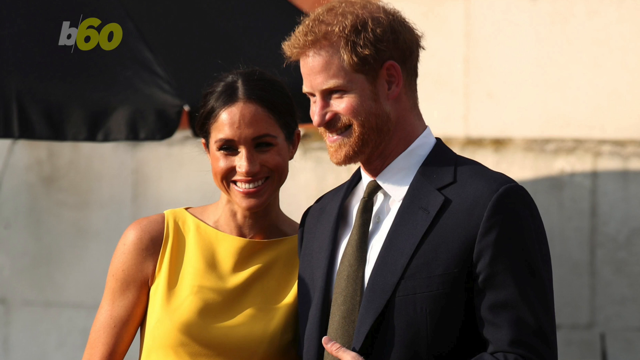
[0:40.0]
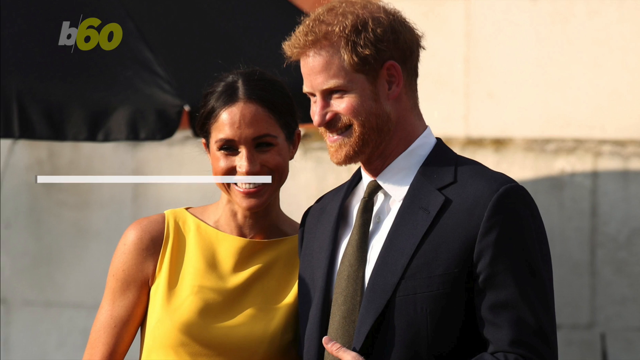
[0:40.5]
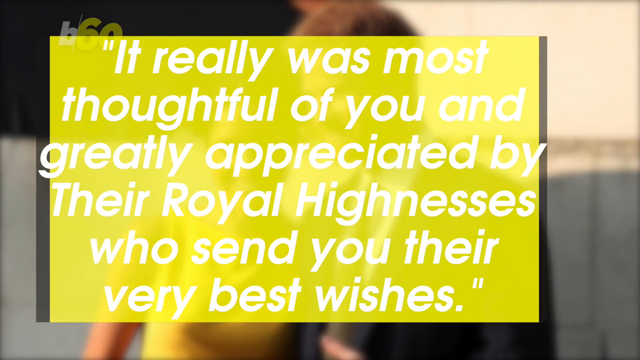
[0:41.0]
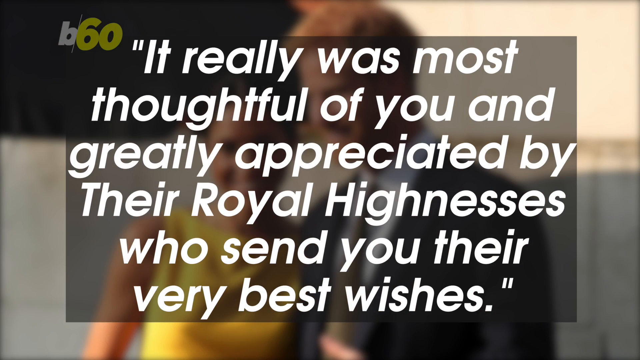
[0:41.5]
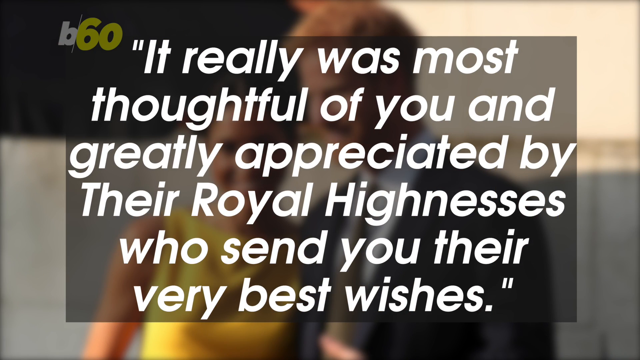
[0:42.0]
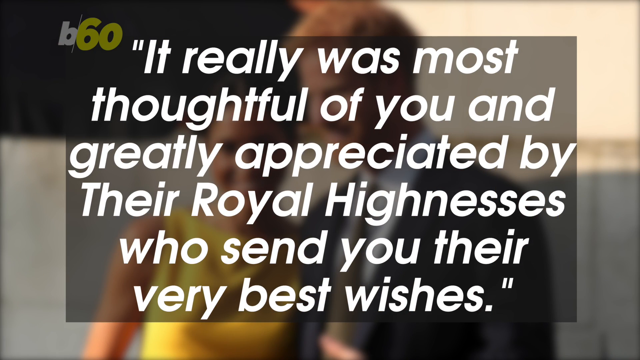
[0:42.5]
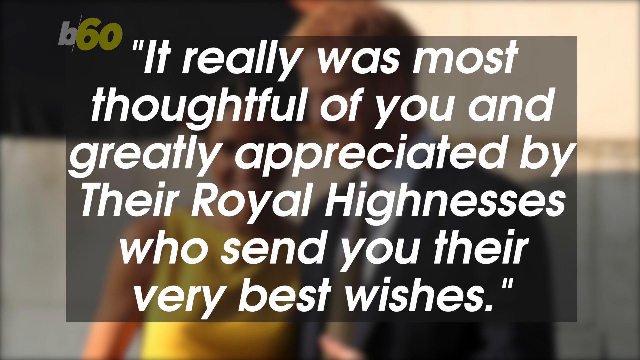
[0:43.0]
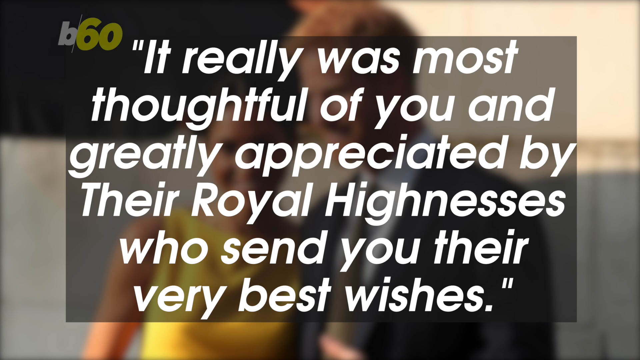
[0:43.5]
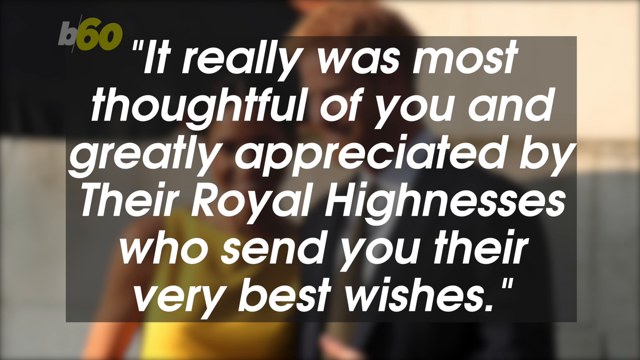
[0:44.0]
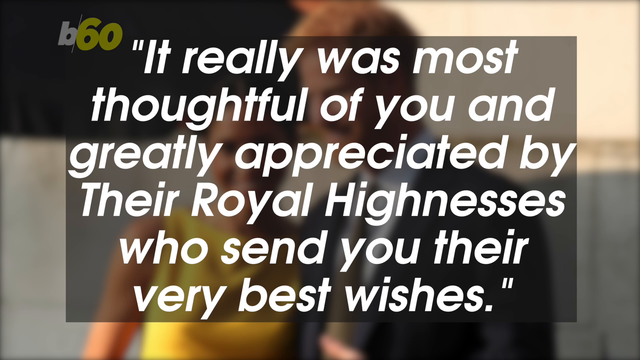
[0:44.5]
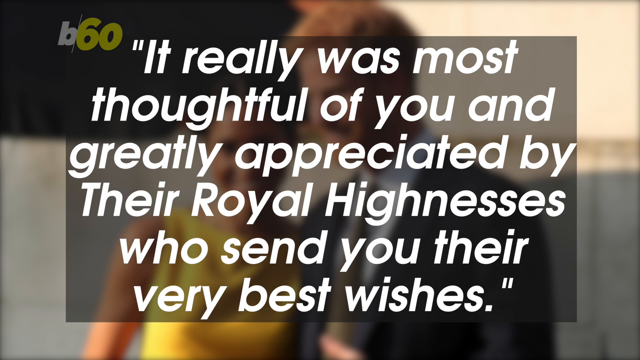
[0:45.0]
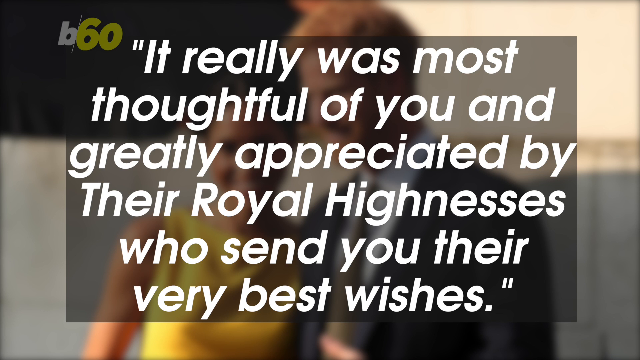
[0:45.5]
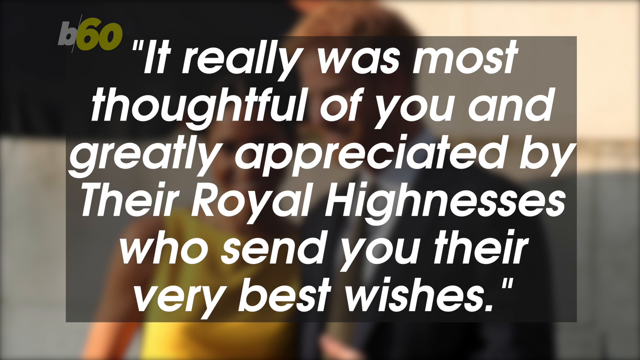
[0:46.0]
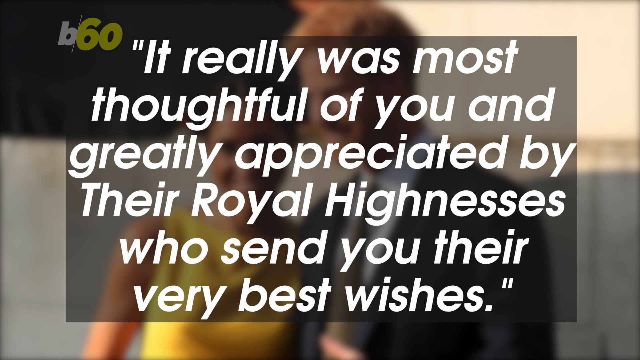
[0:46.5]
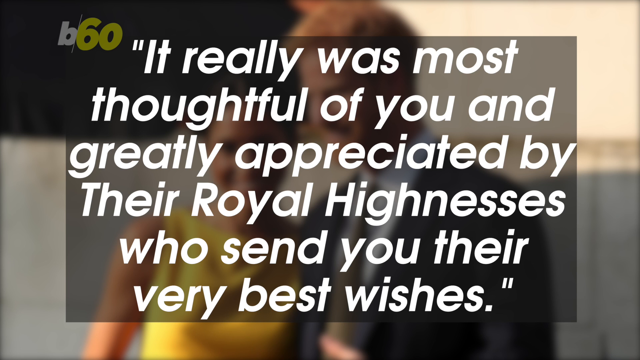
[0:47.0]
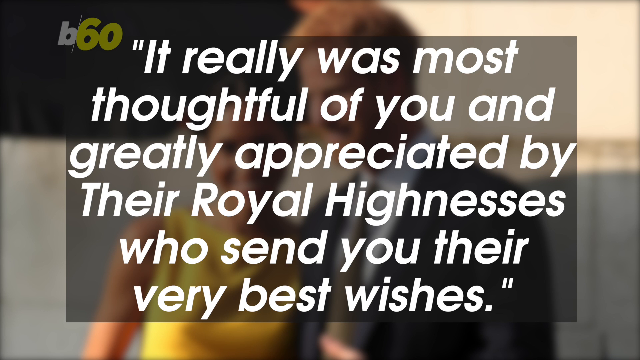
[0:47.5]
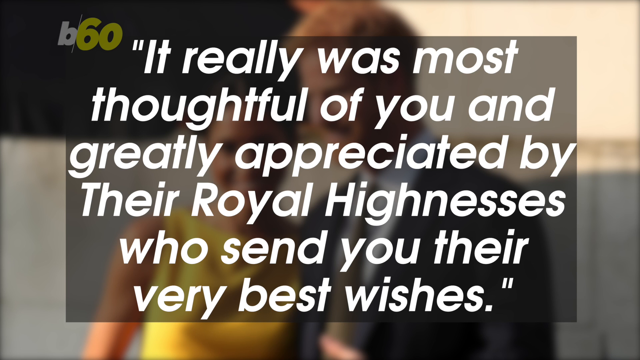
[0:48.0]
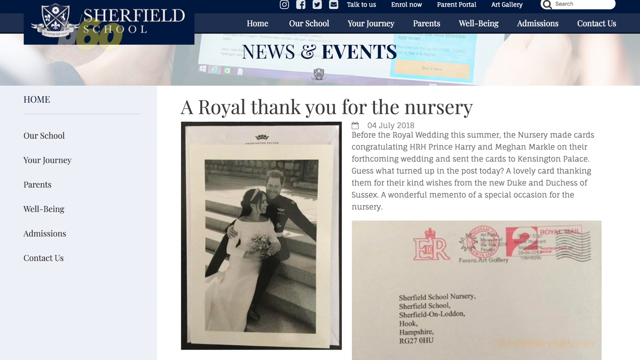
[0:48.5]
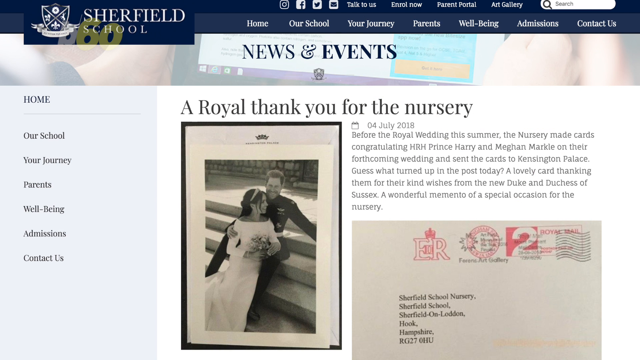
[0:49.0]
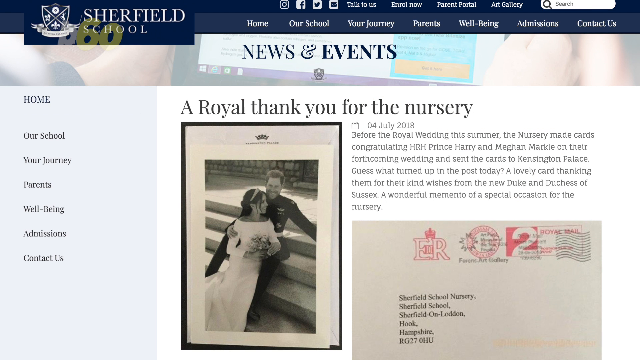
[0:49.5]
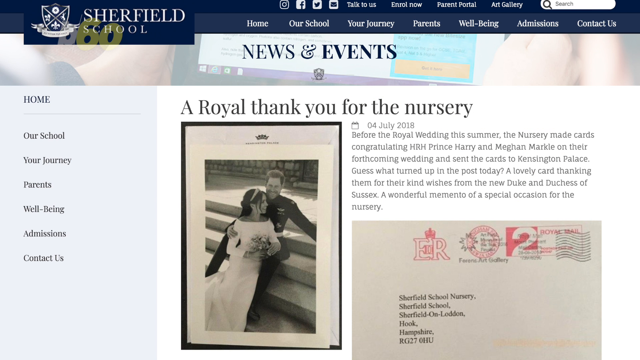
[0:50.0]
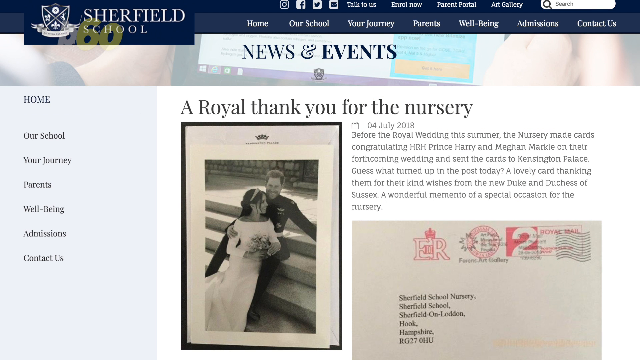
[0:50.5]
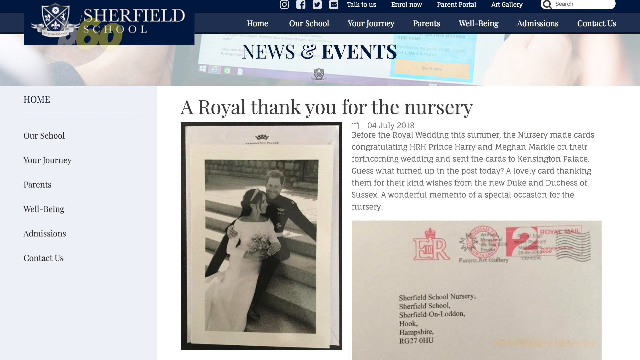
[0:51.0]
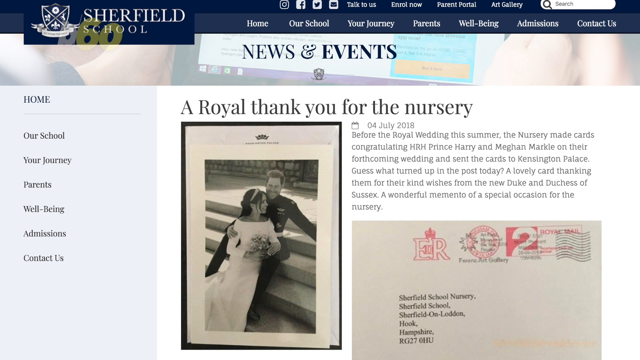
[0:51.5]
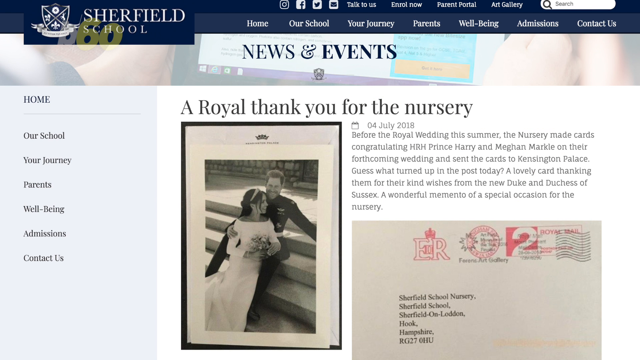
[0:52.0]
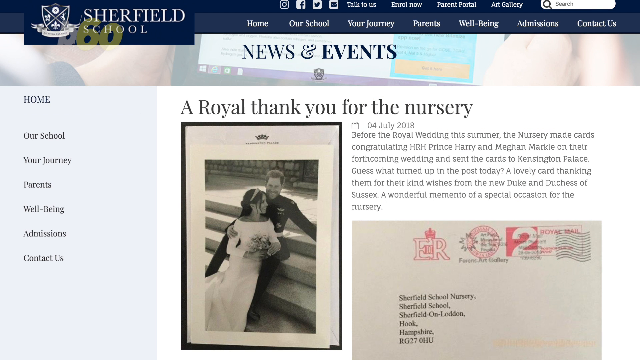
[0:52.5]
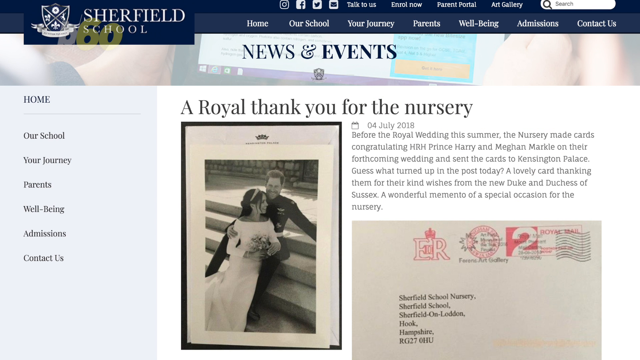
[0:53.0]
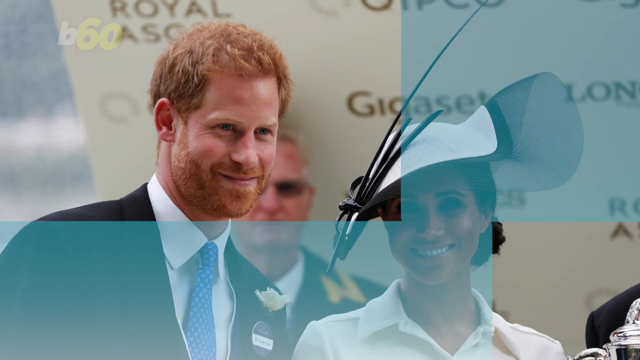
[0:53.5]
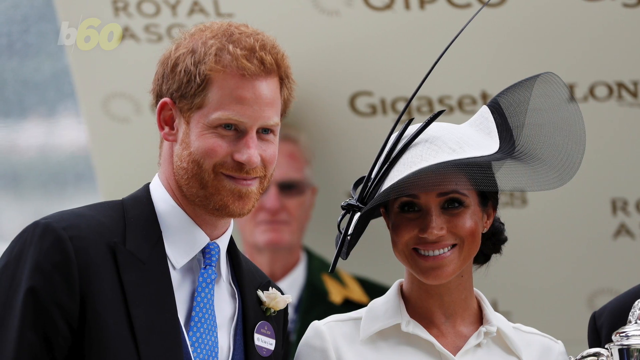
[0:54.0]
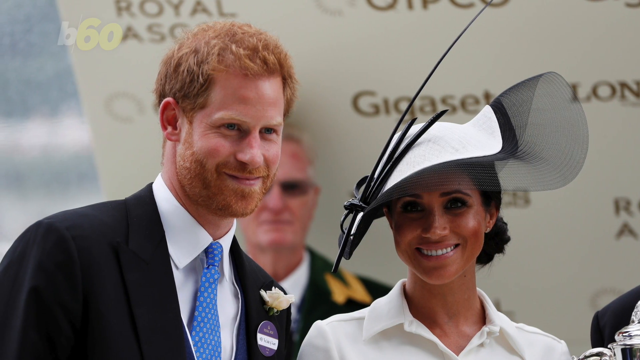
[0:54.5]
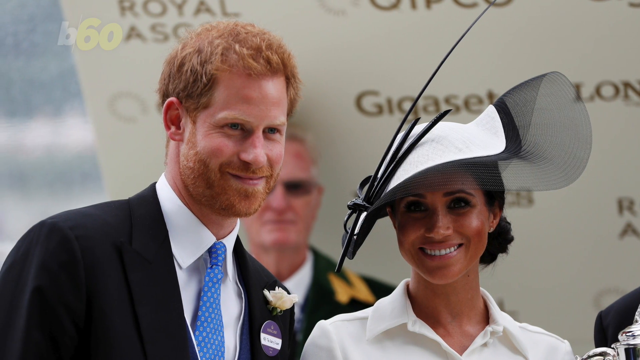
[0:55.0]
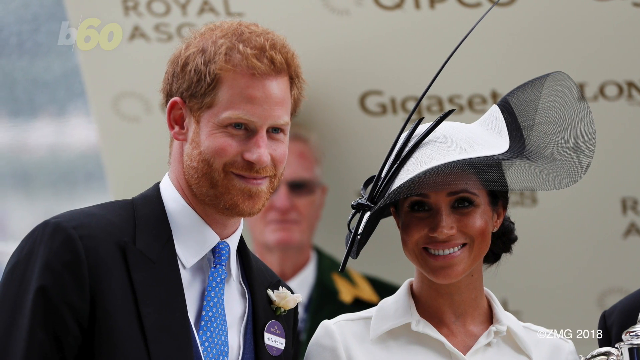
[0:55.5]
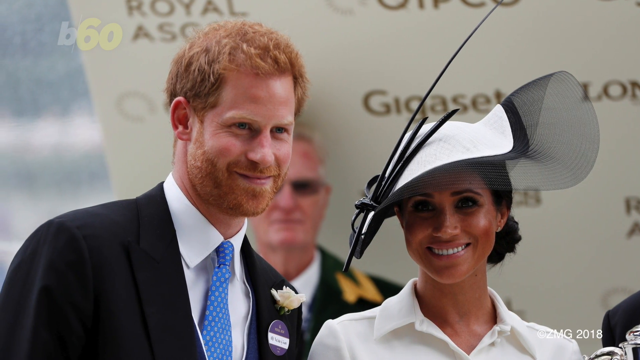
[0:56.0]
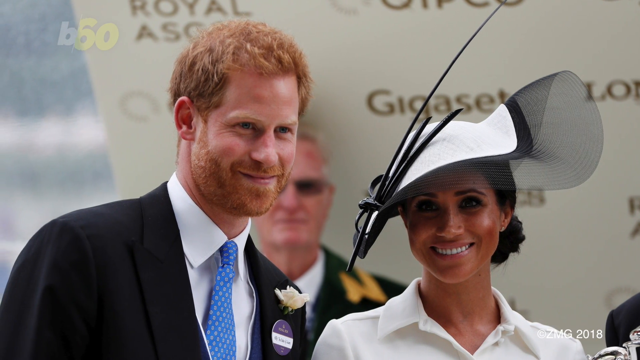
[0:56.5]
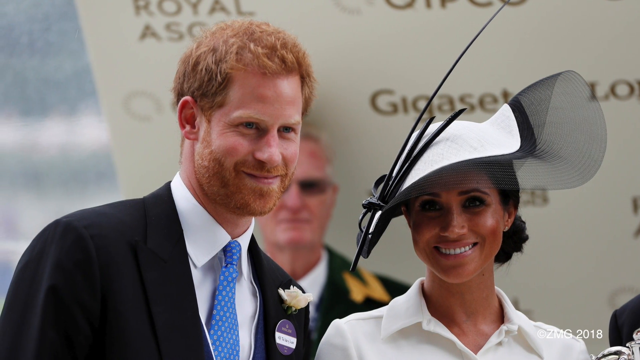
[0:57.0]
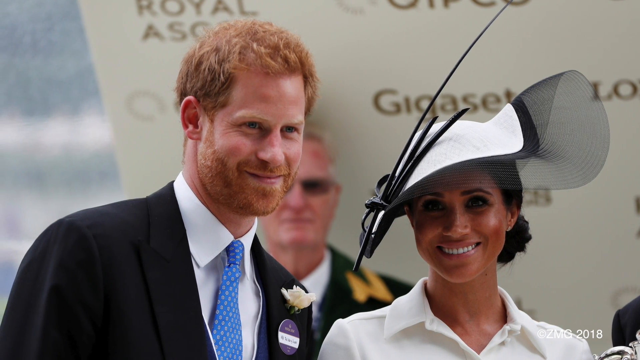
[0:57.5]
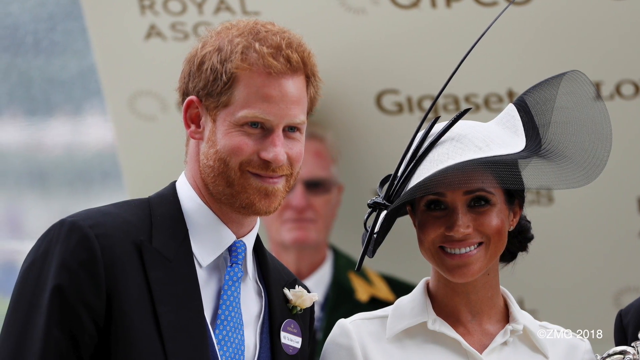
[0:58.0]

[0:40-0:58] The prince and his bride smile, and text appears about how thankful the prince and his wife are for all the support. The card from the beginning appears again; it looks more like a news article, possibly printed in a magazine, quoting them thanking the public for their support, along with the words "a royal thank you for the nursery." Various photos of the prince and his wife flash by, and they look happy in them. The video is presented by Buzz 60, and a card thanks everyone.